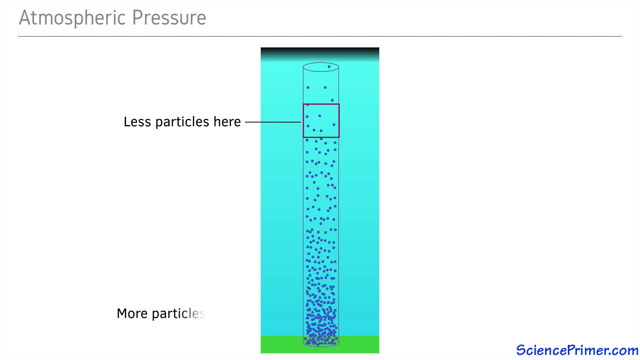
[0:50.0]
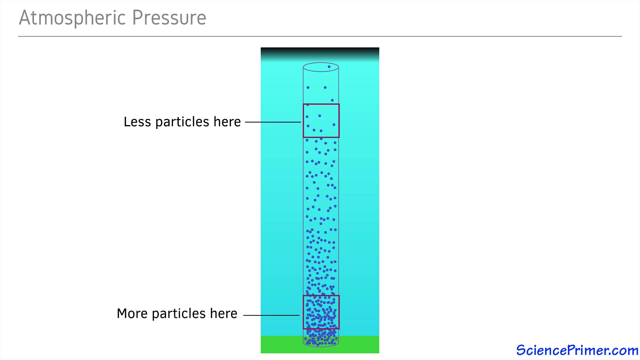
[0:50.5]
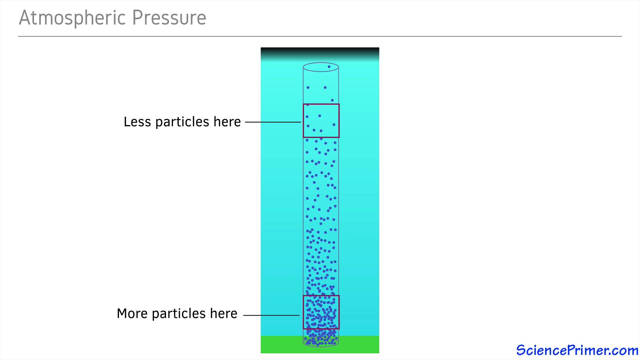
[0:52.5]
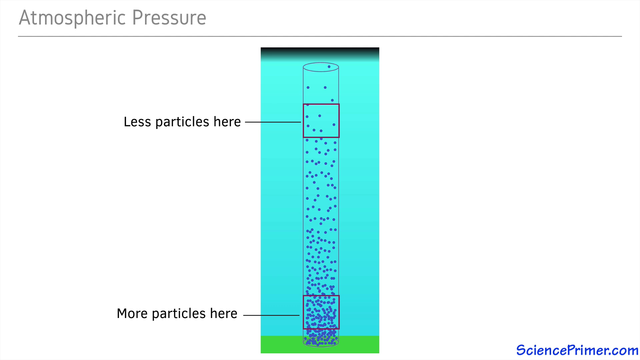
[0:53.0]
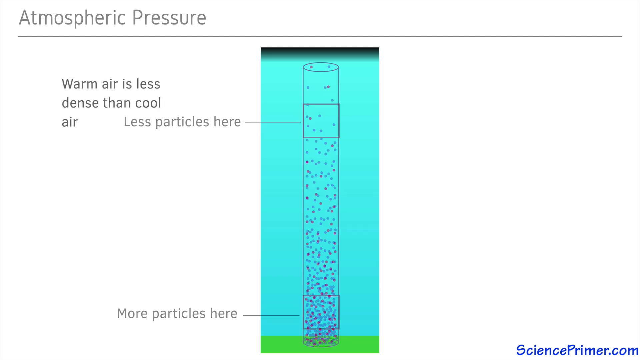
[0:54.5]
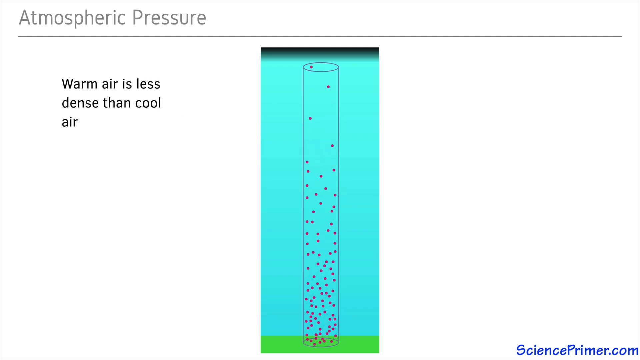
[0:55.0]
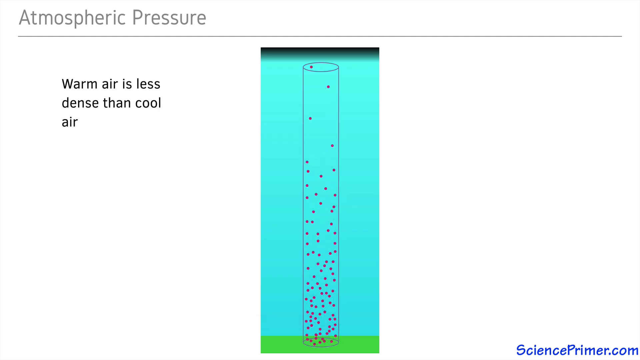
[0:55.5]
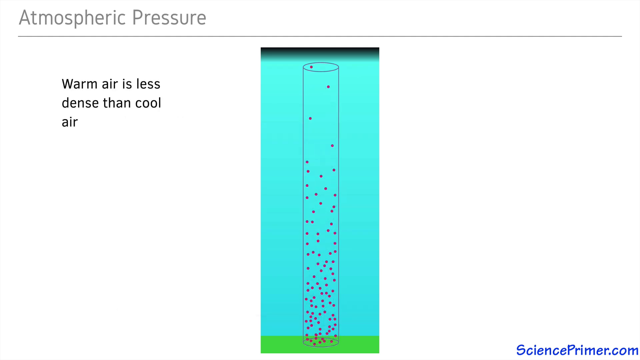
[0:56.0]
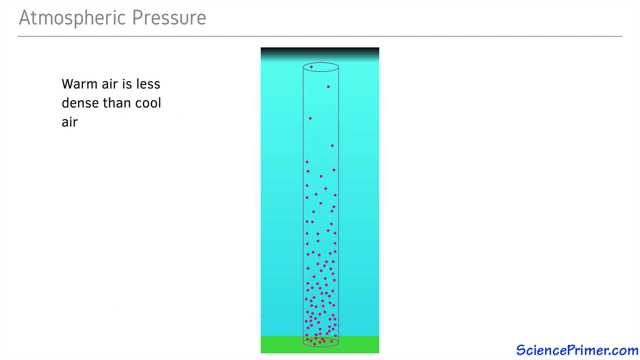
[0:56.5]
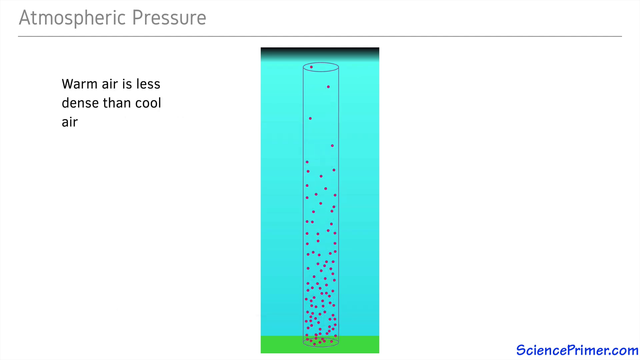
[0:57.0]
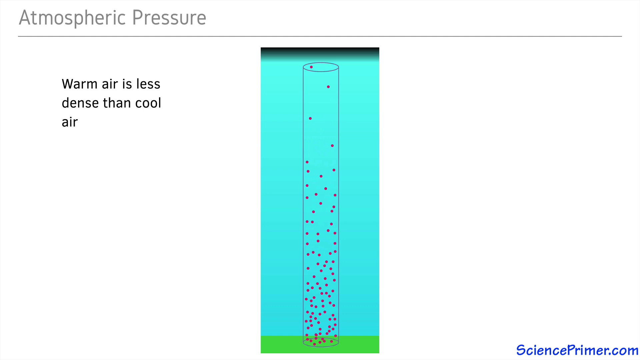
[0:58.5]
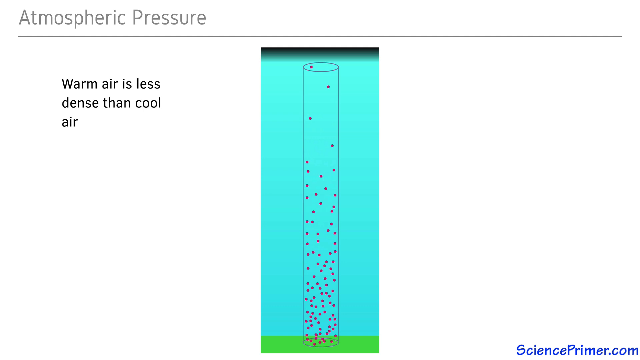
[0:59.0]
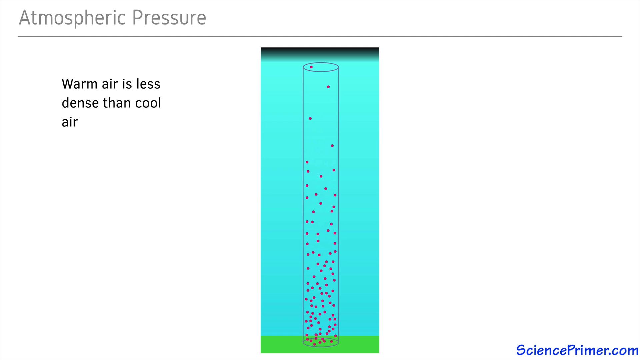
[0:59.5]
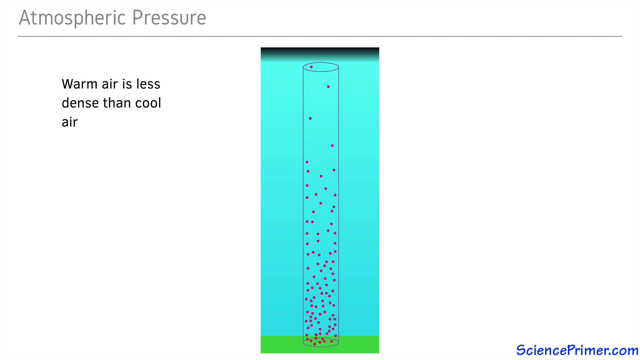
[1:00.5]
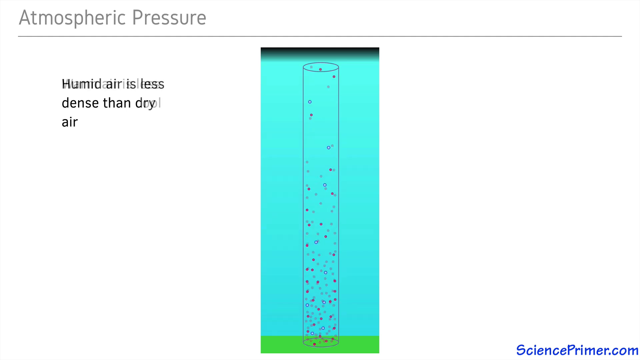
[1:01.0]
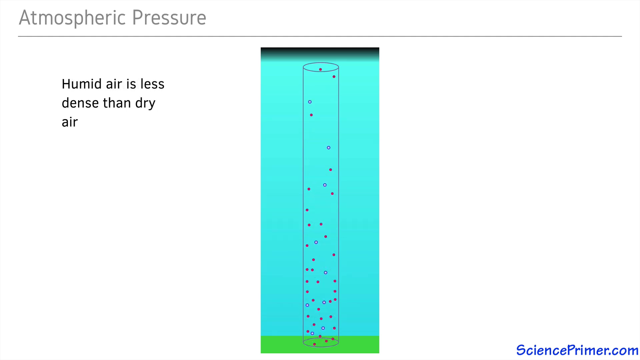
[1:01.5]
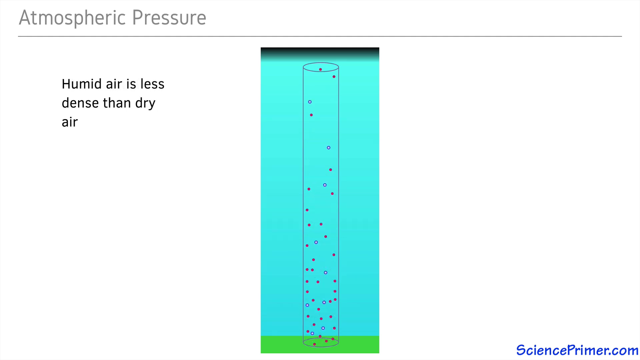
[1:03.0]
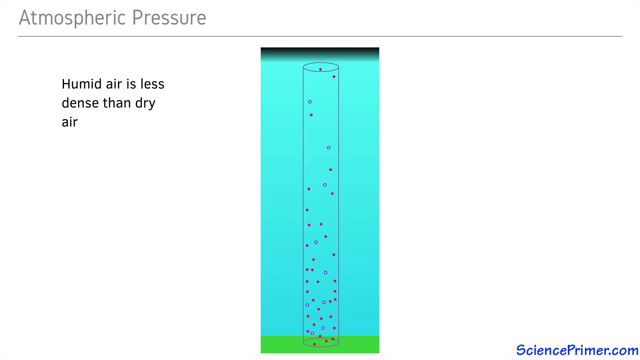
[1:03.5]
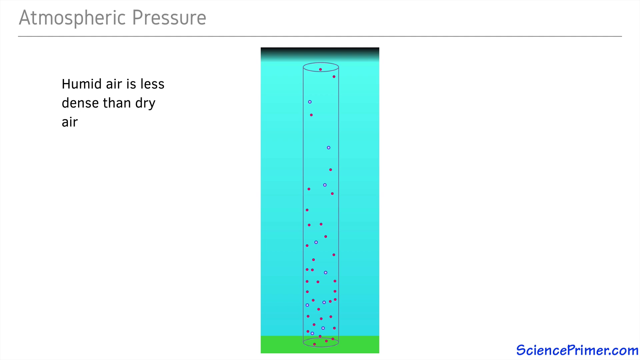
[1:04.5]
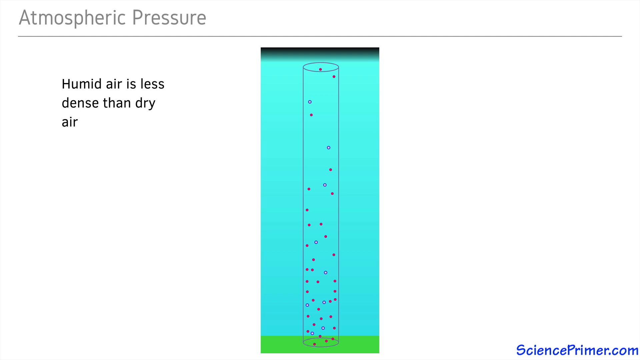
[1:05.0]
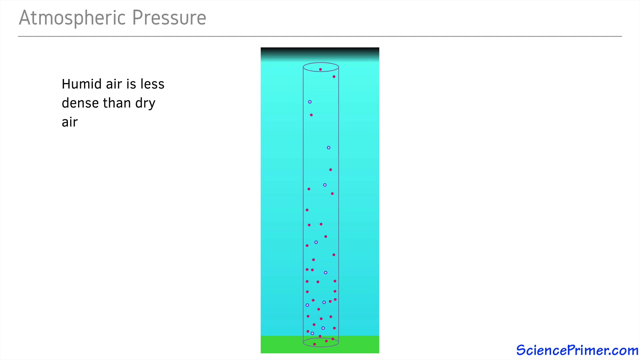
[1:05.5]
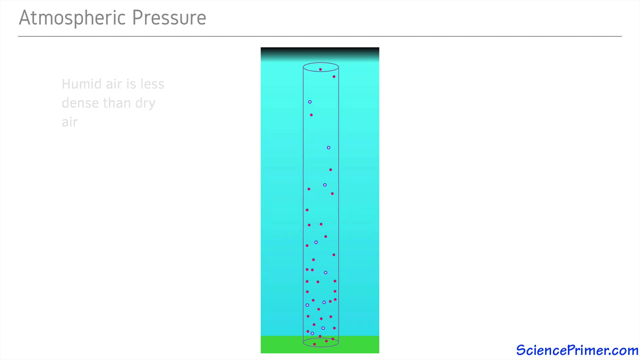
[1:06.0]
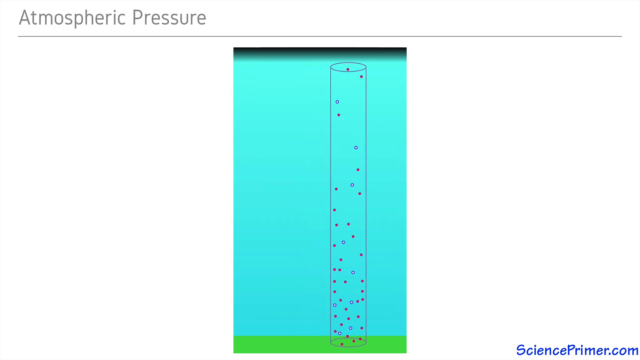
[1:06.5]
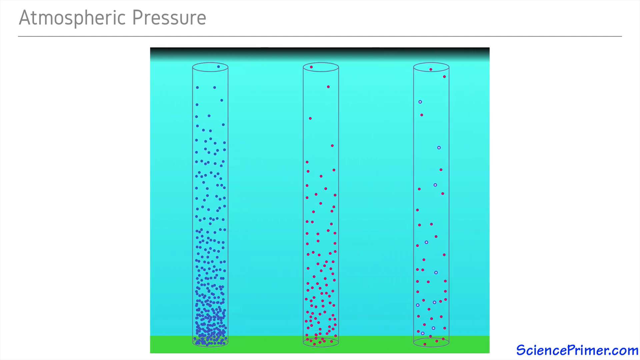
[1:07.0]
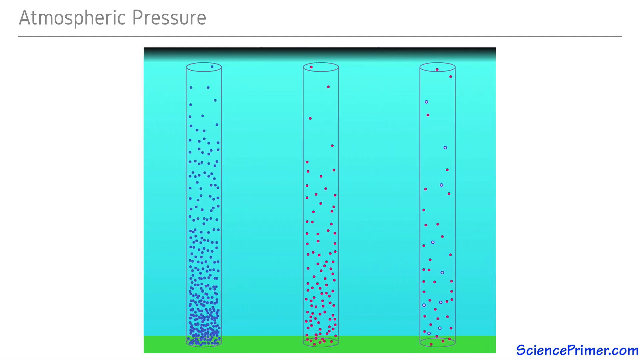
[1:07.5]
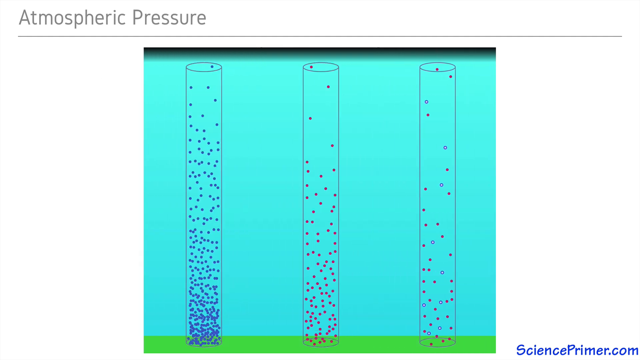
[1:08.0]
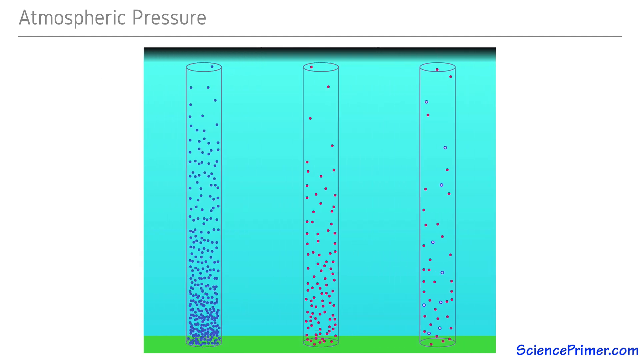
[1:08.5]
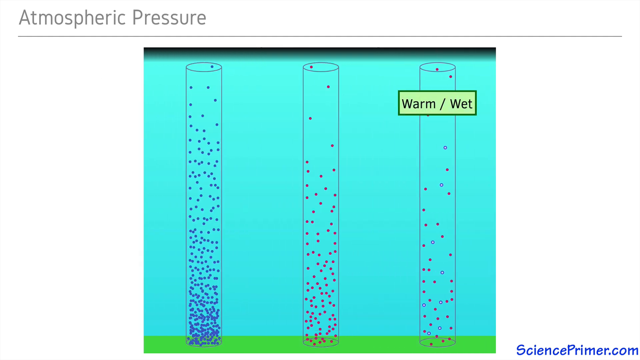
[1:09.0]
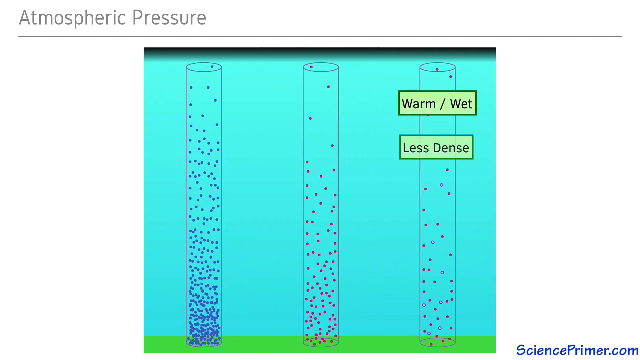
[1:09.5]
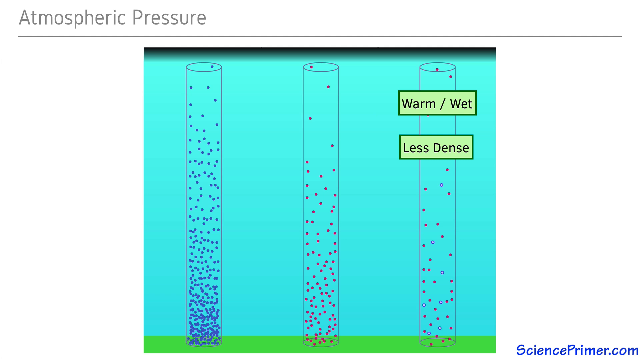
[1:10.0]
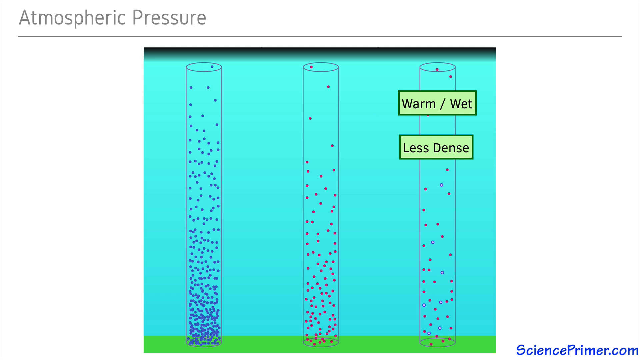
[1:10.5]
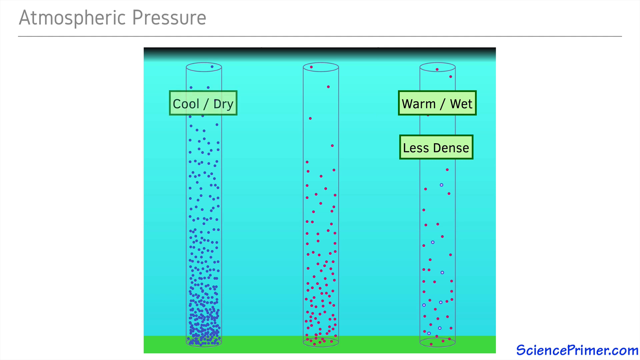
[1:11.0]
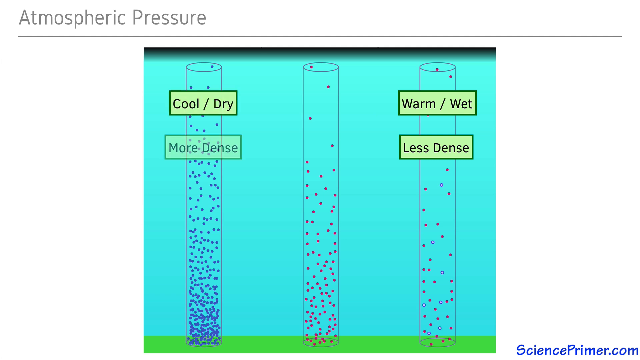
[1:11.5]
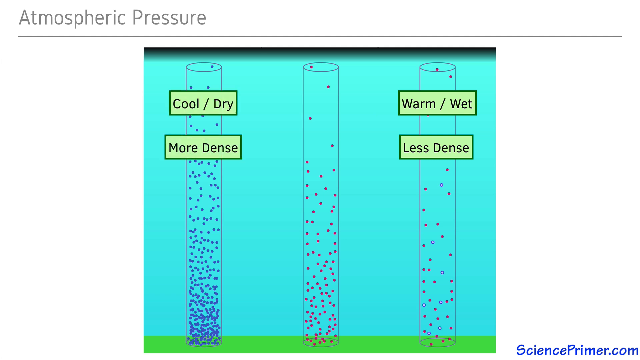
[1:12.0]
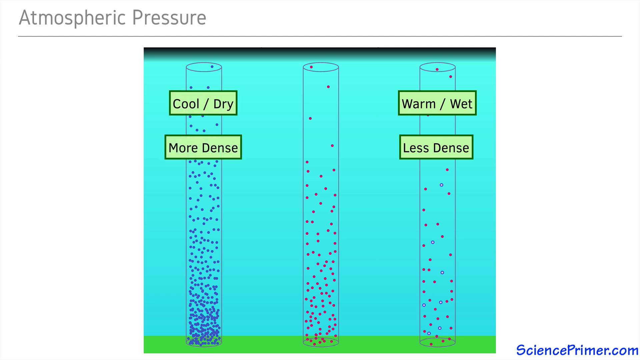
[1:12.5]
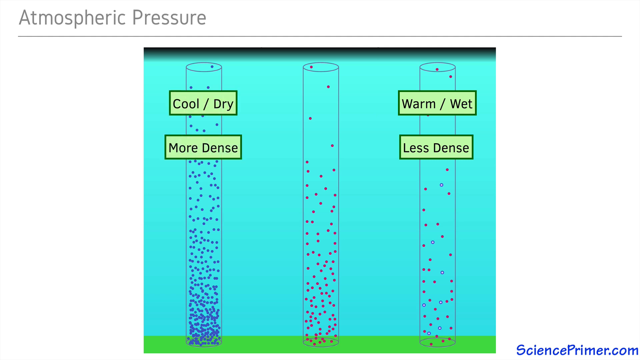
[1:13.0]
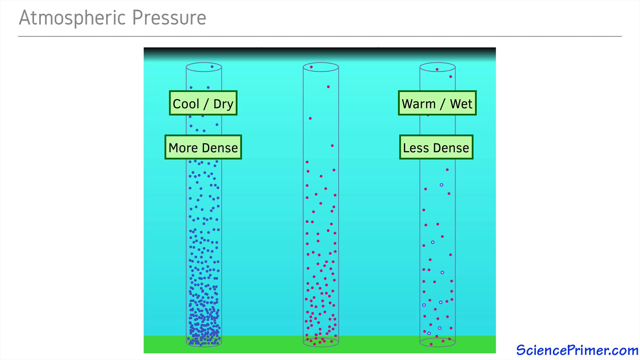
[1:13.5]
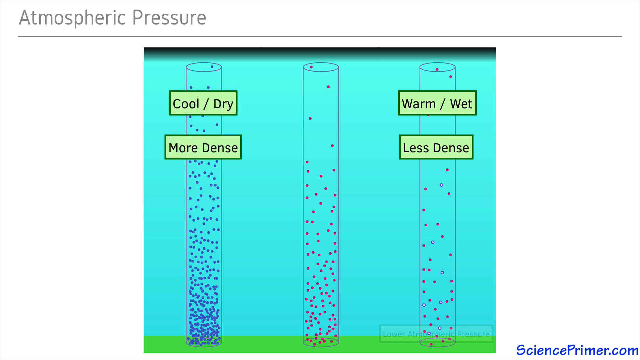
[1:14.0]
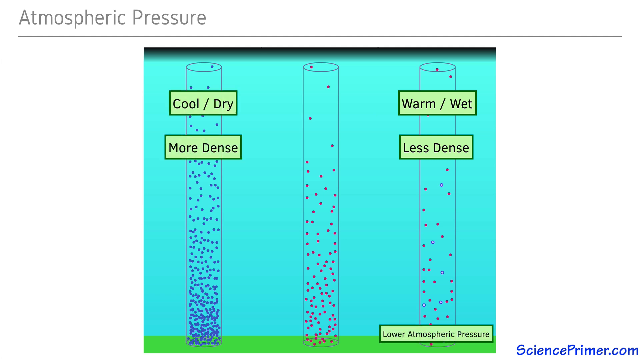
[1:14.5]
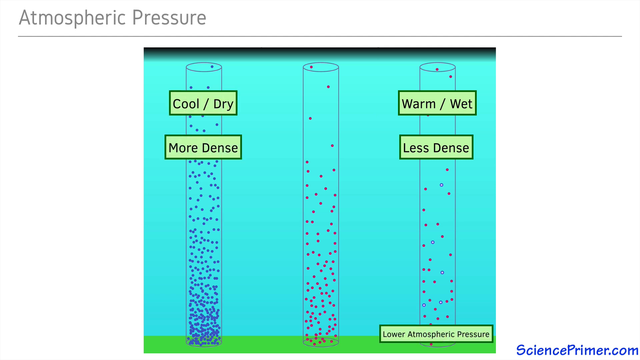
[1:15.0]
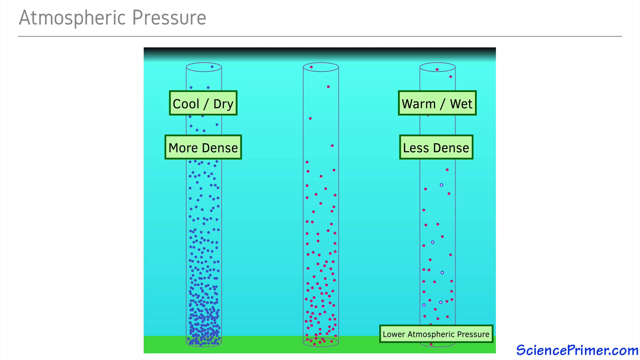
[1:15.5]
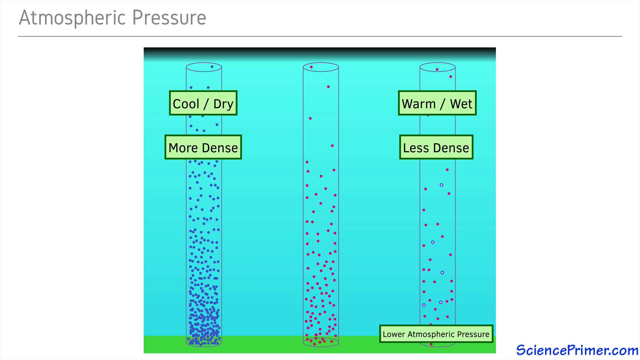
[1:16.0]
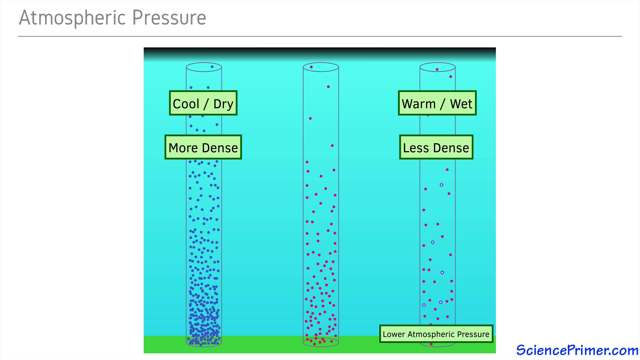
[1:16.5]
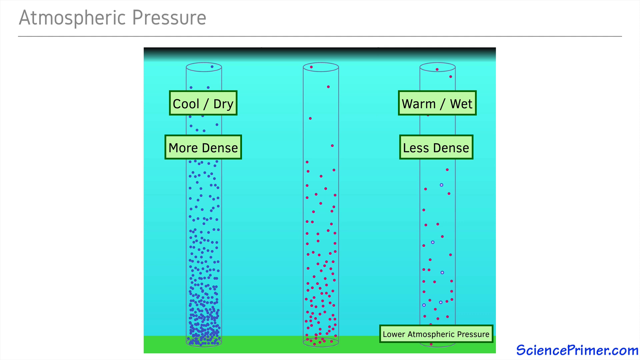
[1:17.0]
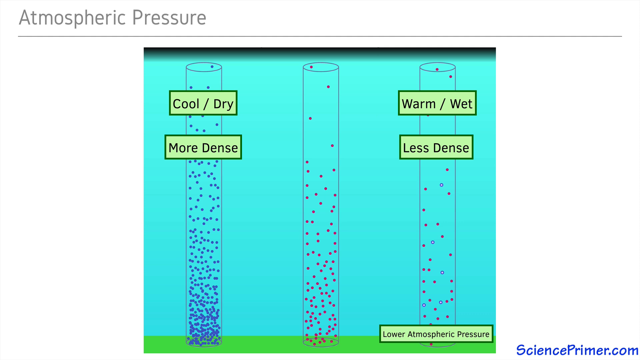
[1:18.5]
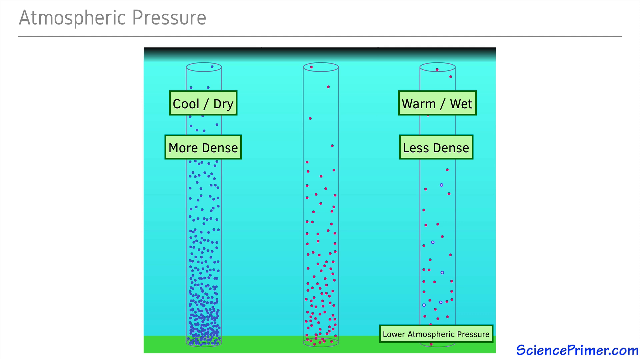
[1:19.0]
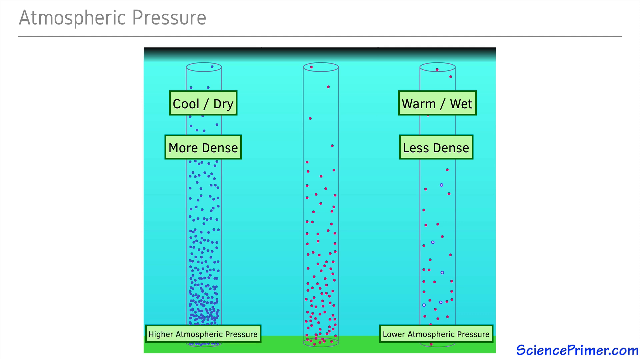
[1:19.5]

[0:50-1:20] Text appears on the bottom left reading "more particles here," pointing to the lower area of the outlined cylinder, where the purple dots form a thicker cluster. Text then appears in the upper left reading "warm air is less dense than cool air," followed by more text on the upper left reading "humid air is less dense than dry air." Inside the cylinder, some dots disappear and some become clear, no longer shaded in or purple. Three separate tall outlined cylinders then appear, one on the left, one in the middle and one on the right. Words appear in the upper area of the right cylinder: "warm, wet, less dense," and then on the left cylinder: "cool, dry, more dense." Text appears in the bottom right corner reading "lower atmospheric pressure," and then words on the bottom right side read "higher atmospheric pressure."